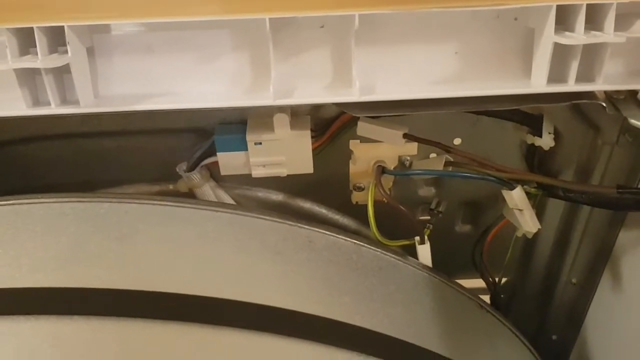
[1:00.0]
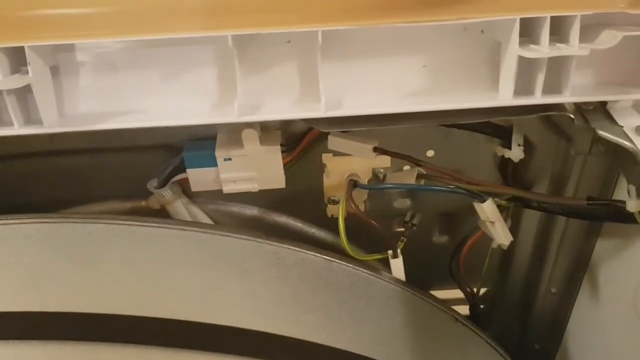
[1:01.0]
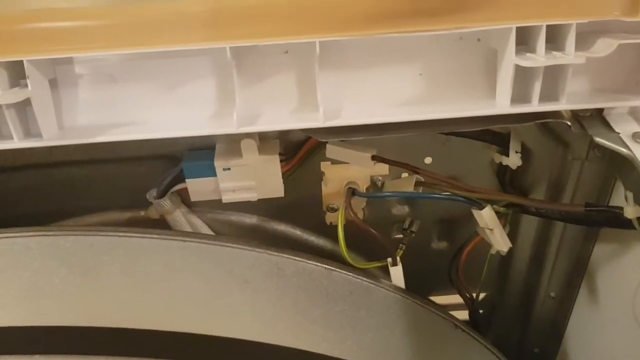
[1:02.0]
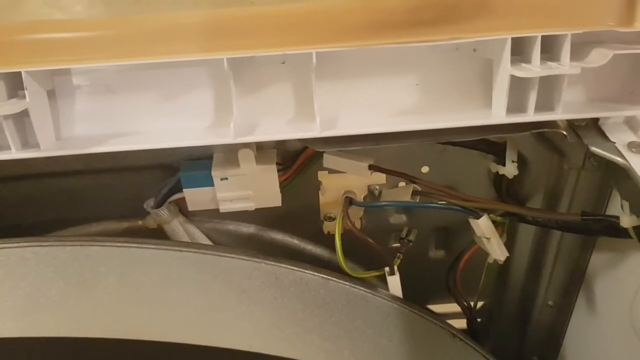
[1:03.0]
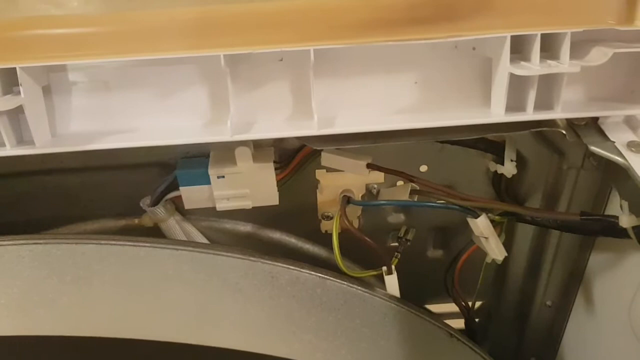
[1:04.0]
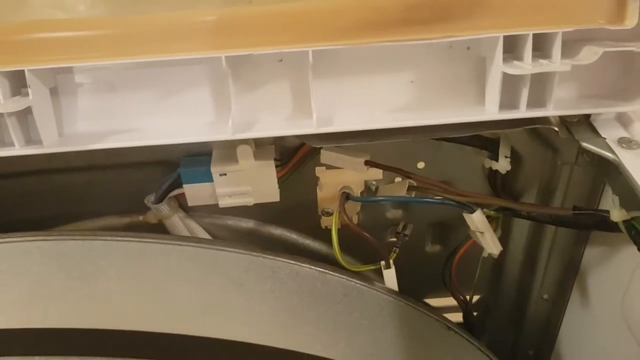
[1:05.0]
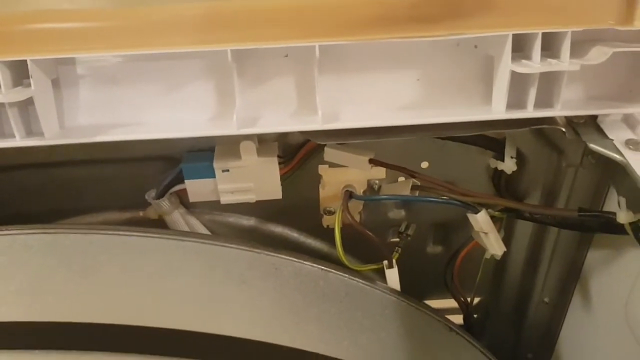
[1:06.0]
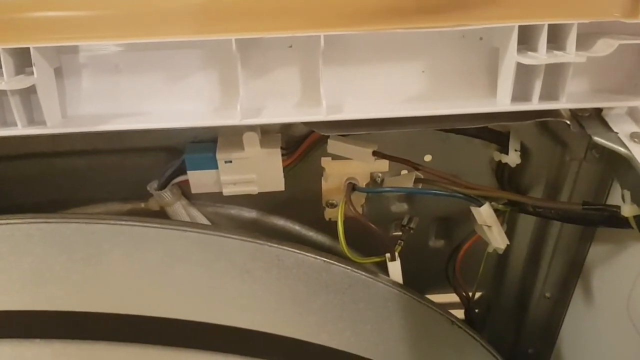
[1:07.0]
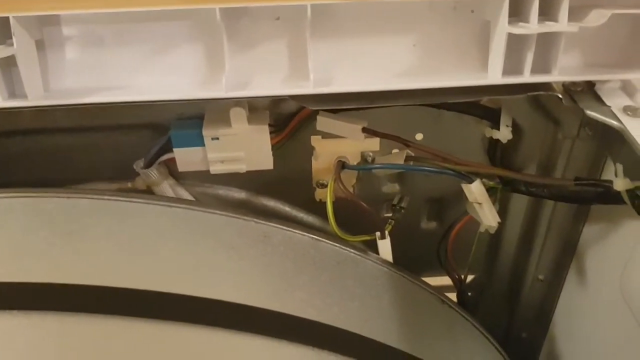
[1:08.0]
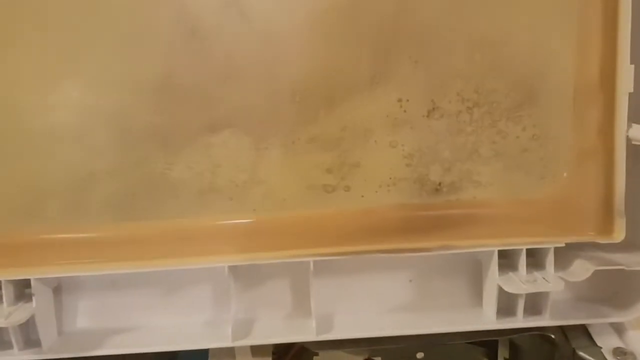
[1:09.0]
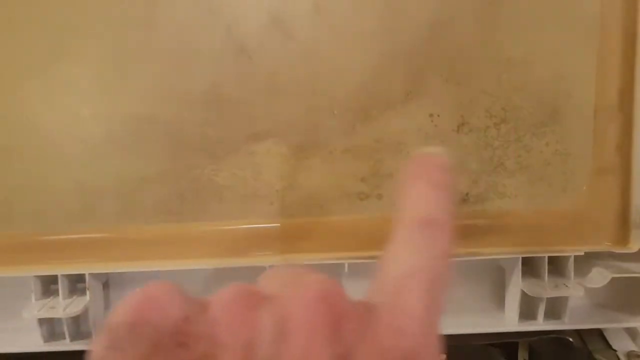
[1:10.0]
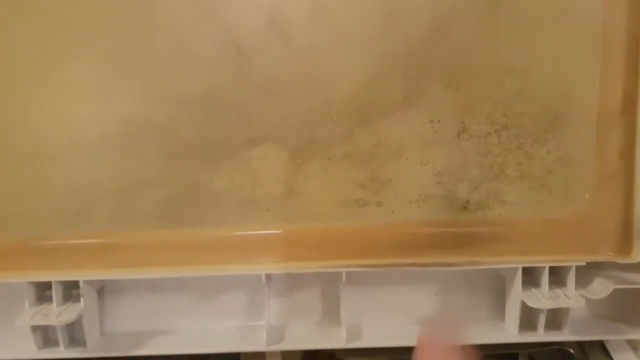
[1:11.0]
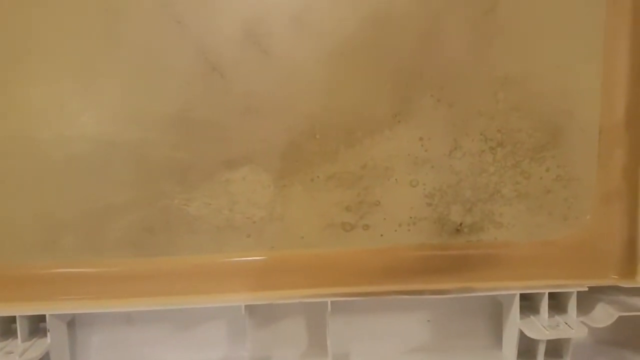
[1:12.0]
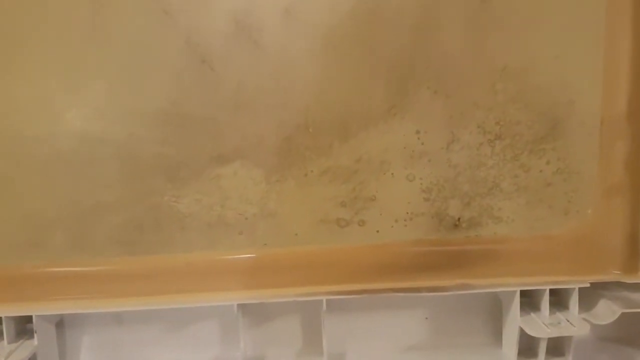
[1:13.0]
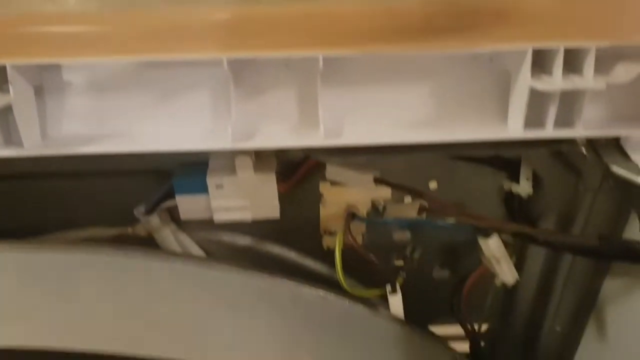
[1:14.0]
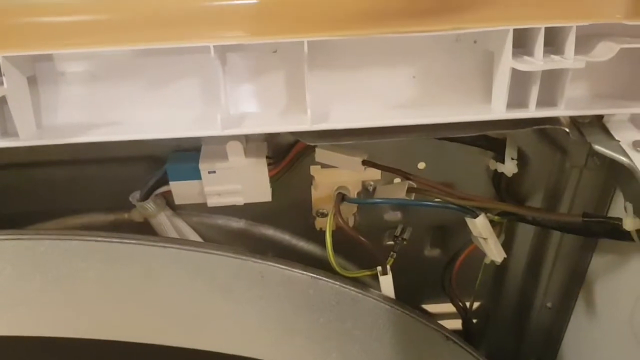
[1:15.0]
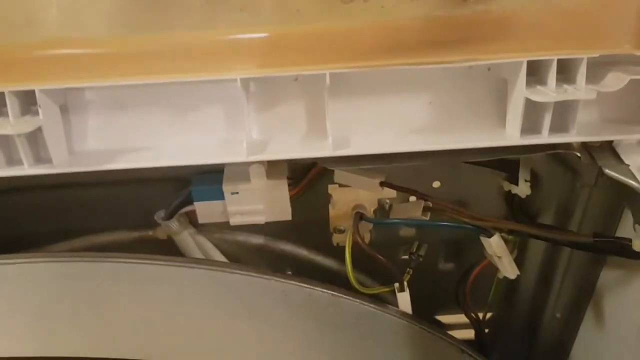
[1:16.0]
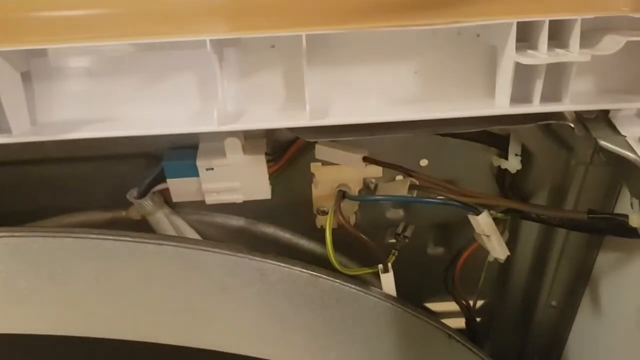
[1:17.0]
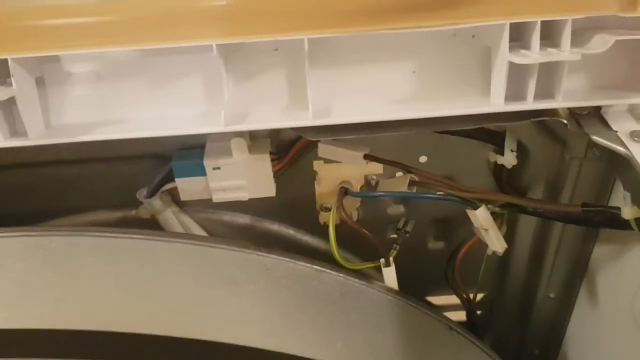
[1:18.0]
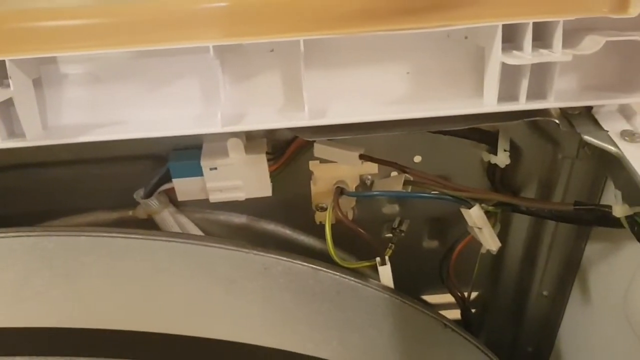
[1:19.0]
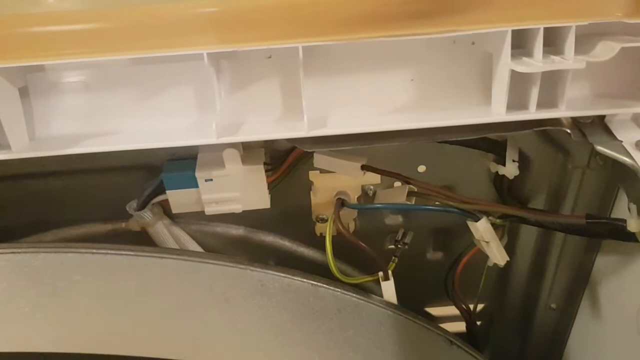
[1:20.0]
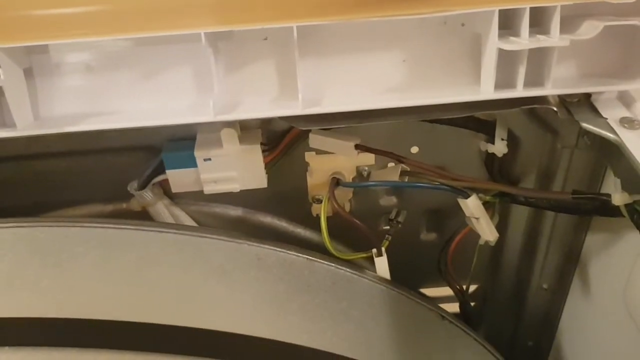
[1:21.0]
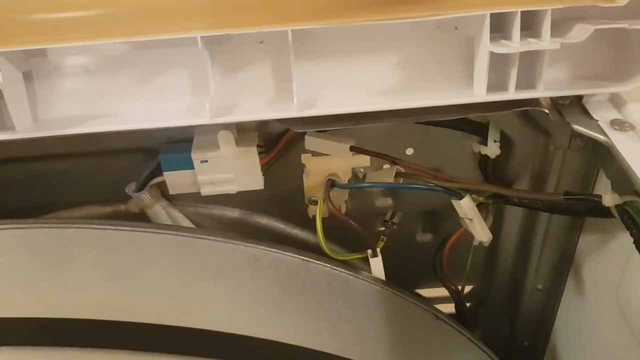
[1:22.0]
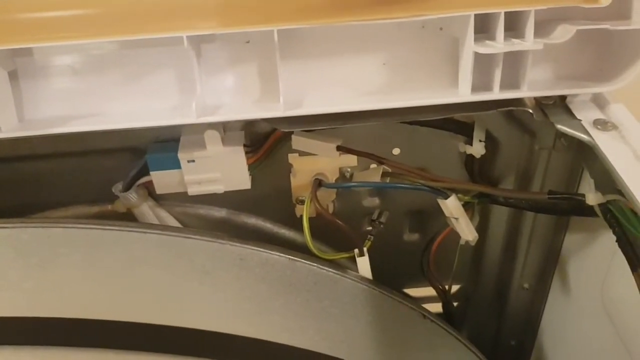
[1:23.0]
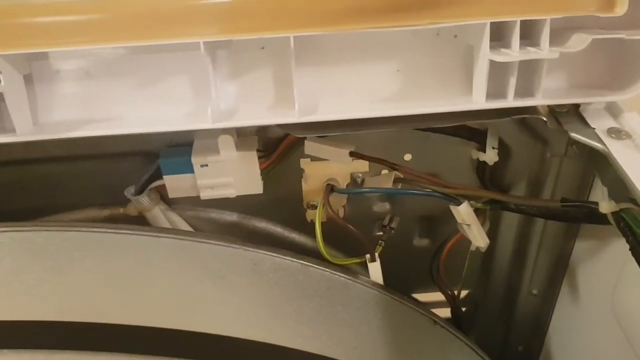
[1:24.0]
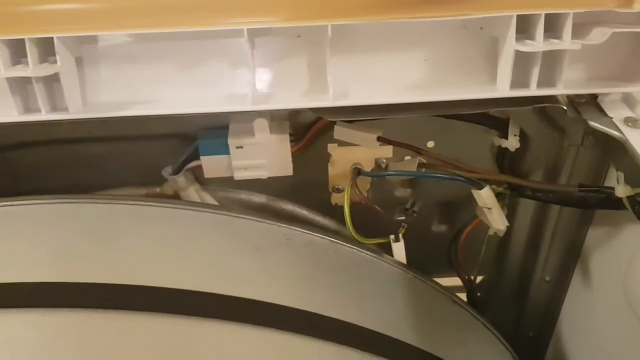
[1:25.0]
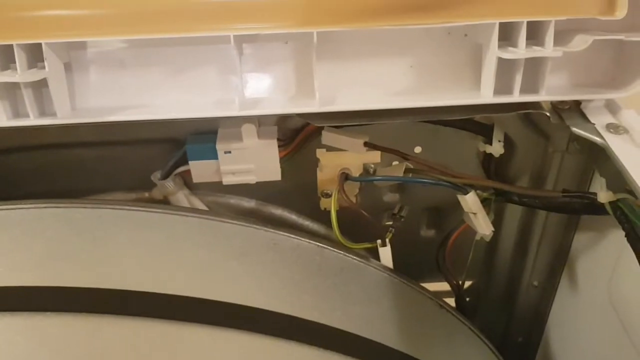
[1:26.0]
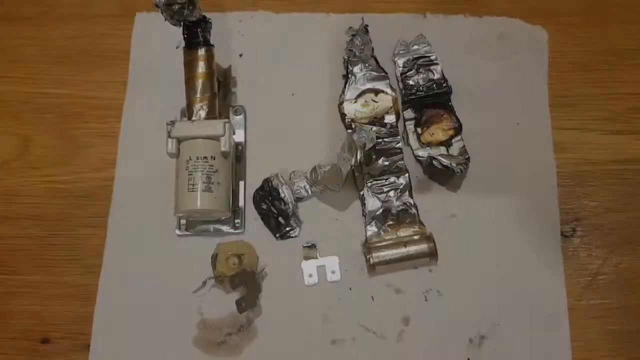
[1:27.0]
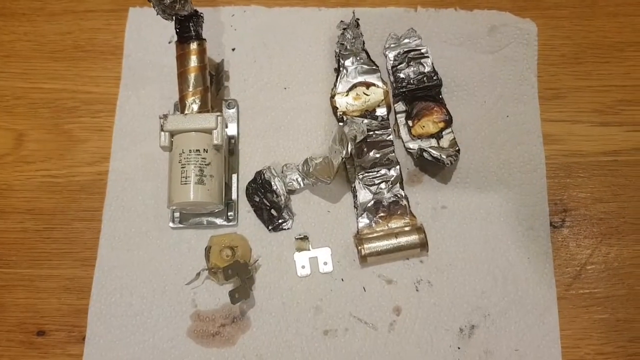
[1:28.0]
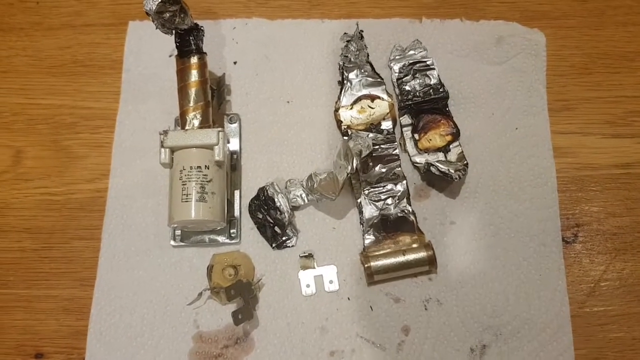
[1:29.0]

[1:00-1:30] The wires are still shown. The camera moves a little to the right and a little forward; the area is very tight. The camera then zooms up toward the bottom of the open lid, which has dirt, or possibly rust, on it: splotches with darker and lighter areas. The person's finger circles around the area while pointing to it, indicating the whole discolored area. The camera pans back down toward the wires and tries to get even further back there; the person's hand appears for a split second, and the camera tries to zoom in on the wires even more. The scene then switches to components taken out of the dryer, laid on what looks like a piece of white paper or a paper towel. There are five different parts.